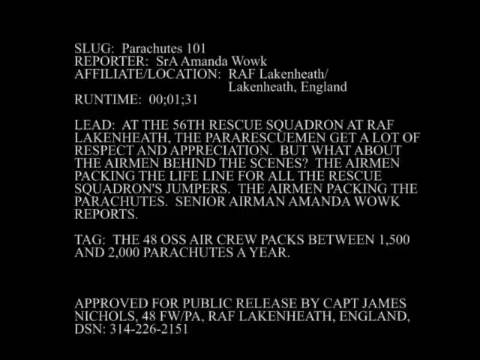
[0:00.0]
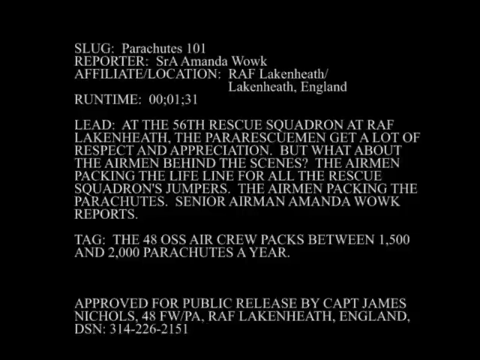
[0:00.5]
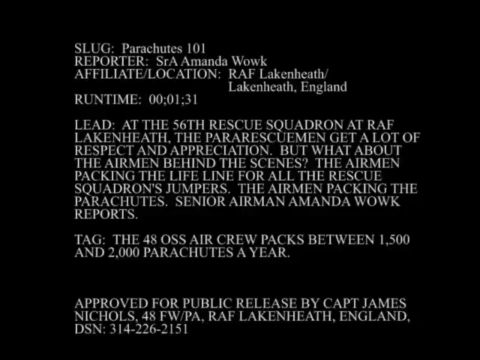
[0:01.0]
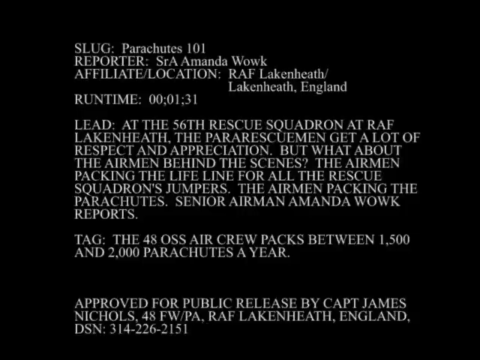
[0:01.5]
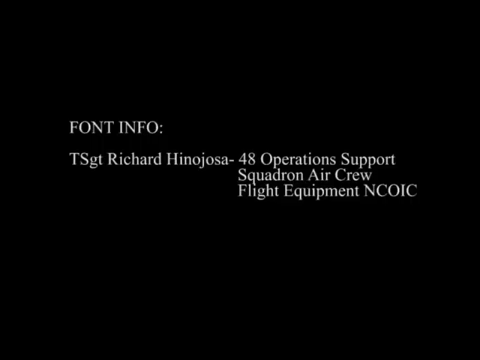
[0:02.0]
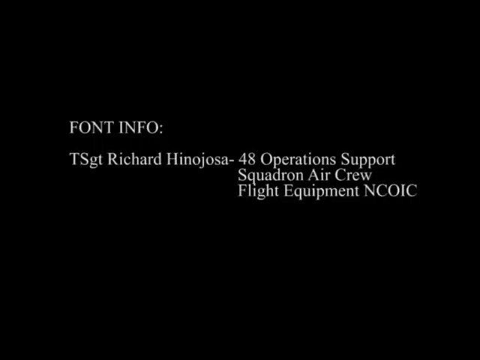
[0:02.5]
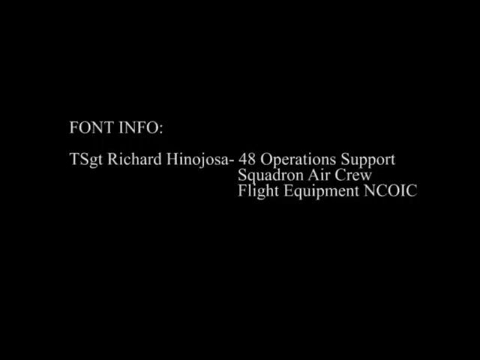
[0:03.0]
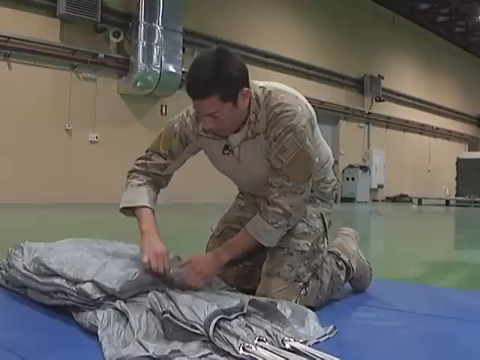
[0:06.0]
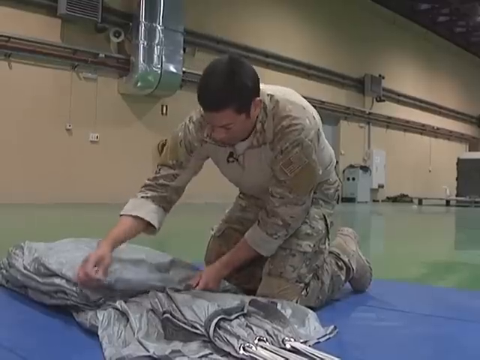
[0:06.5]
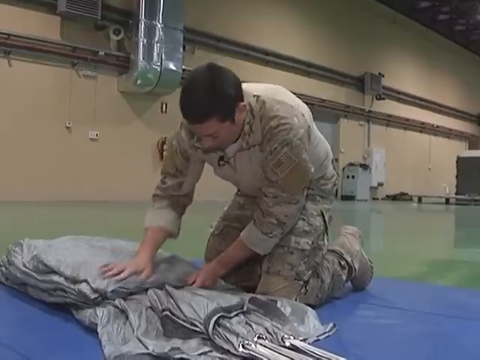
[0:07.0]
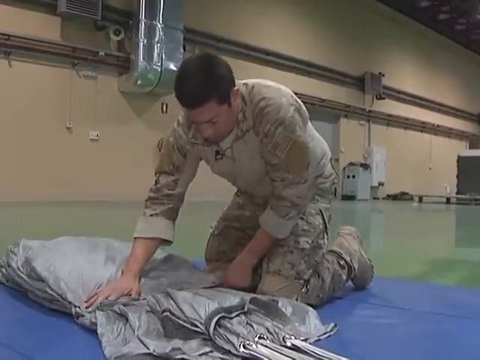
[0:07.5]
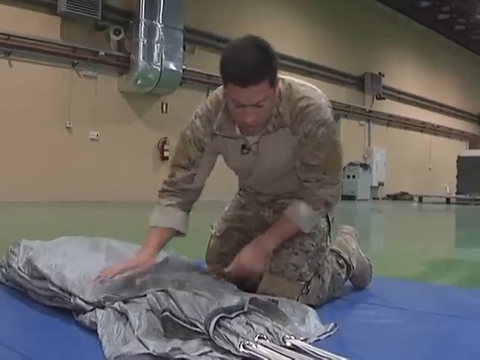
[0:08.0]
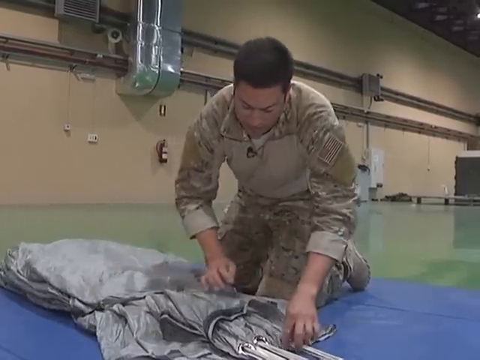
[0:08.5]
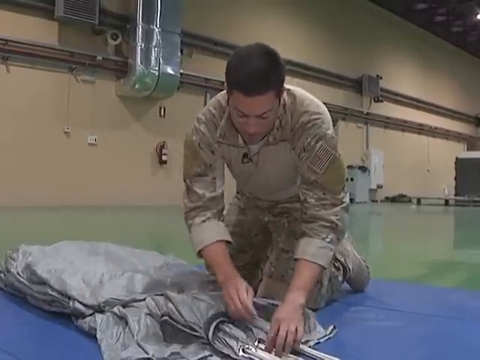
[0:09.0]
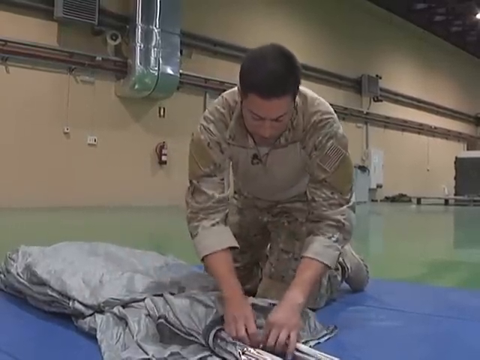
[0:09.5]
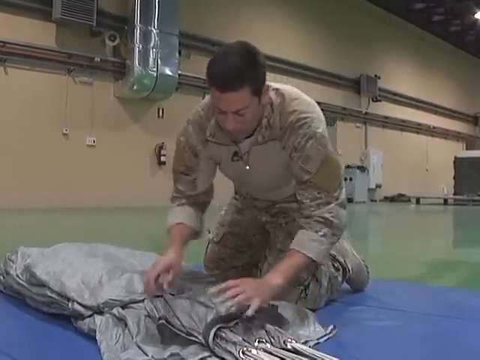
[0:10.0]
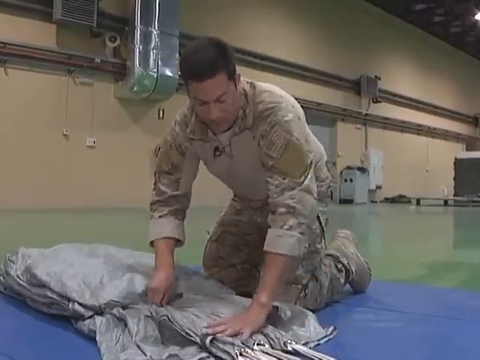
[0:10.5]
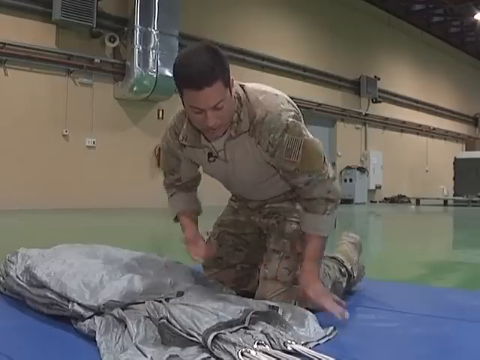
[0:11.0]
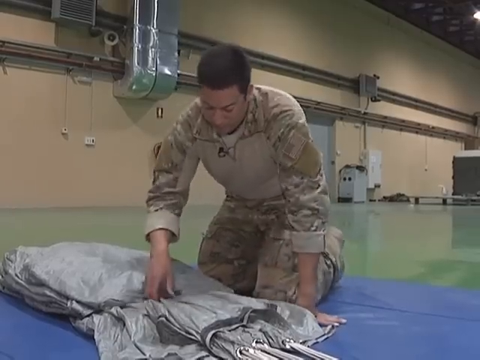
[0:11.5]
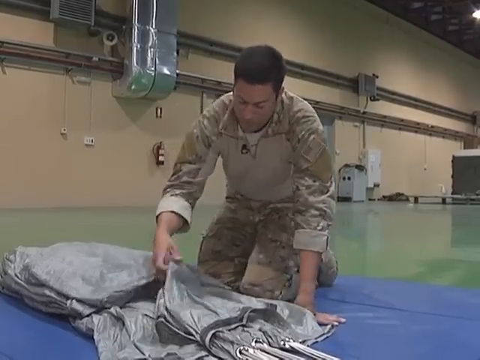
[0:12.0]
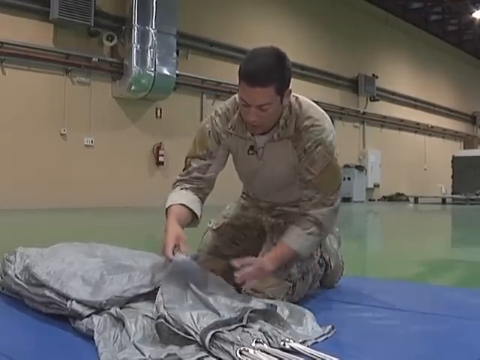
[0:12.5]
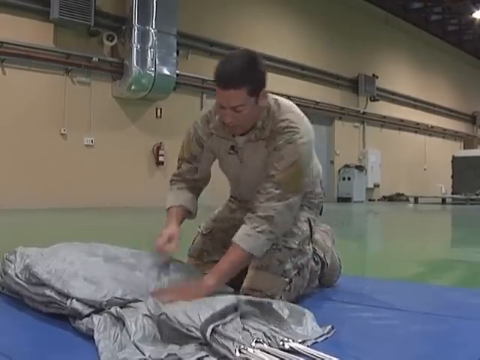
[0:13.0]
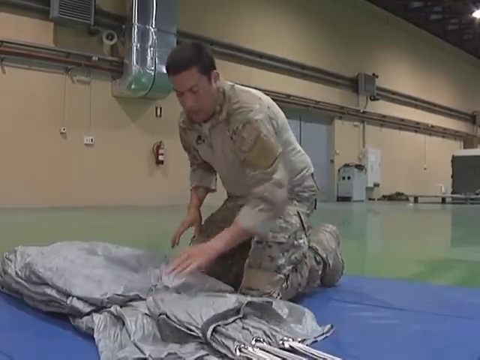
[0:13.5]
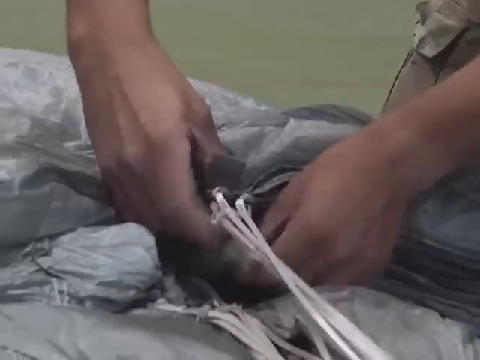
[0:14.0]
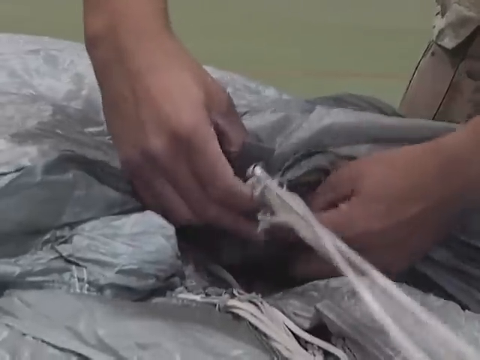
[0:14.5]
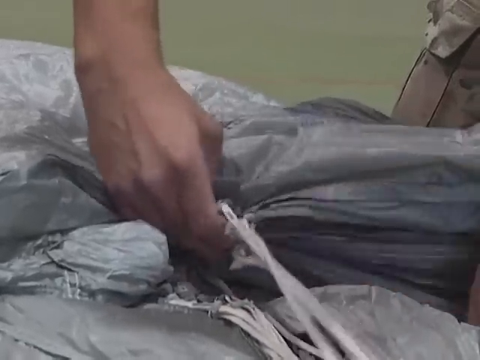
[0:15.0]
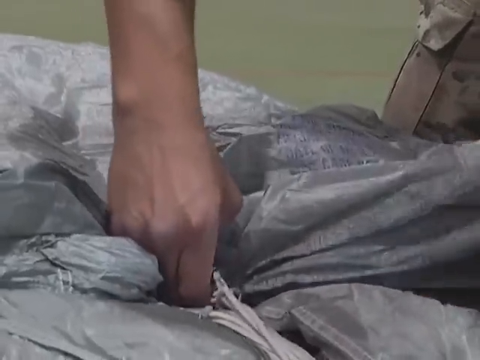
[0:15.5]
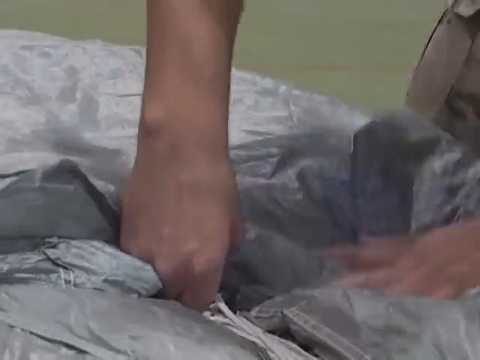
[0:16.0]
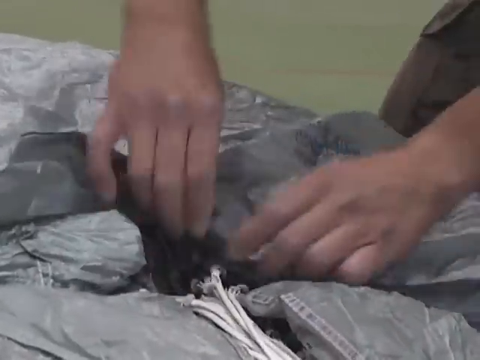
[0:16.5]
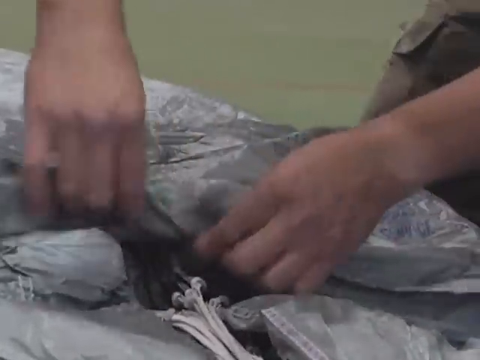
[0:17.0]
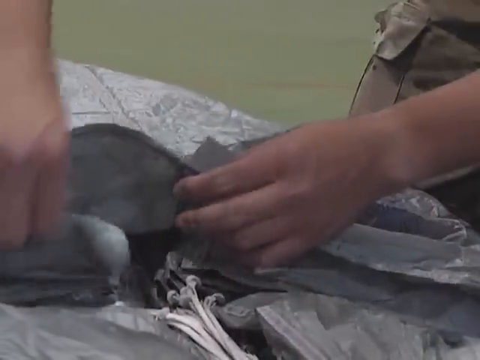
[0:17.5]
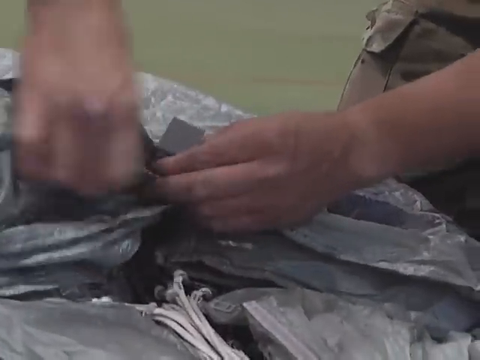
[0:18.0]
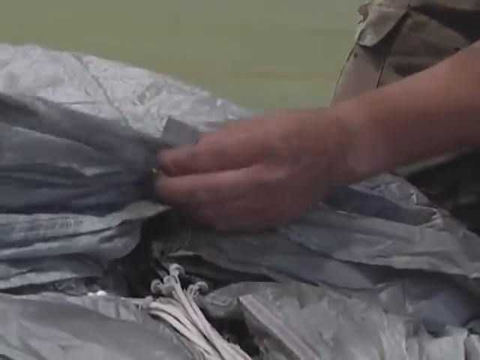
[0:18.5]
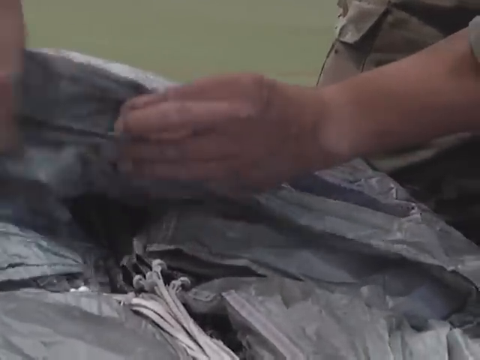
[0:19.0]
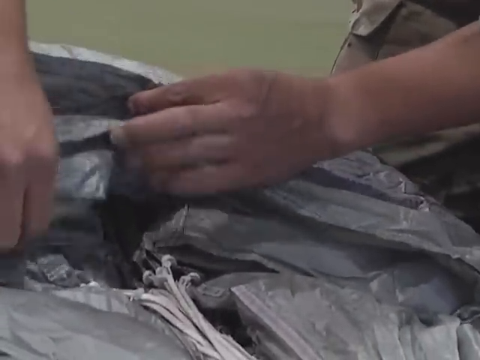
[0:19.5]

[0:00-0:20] The video opens with on-screen text explaining what is about to be shown, including information about airmen who are packing parachutes. A young man in beige army fatigues with short dark hair and an American flag patch on his left arm kneels on a blue mat inside a large room that looks like a gymnasium. In front of him is a folded gray parachute. He smooths its edges with his right hand, then reaches over and smooths the edges. A close-up shows his hands, which appear to be folding the fabric around nylon cords that are lying together. He takes opposite corners of the folded fabric and brings them closer together just above the nylon cords projecting from the fabric.